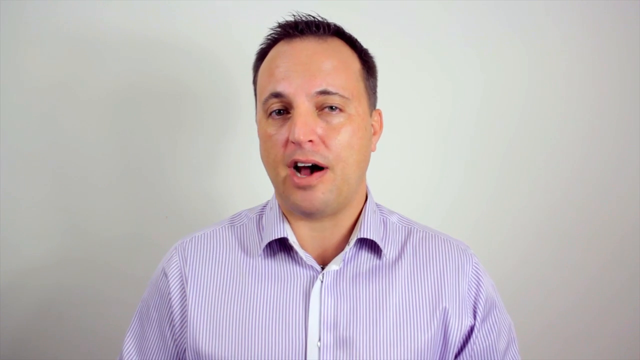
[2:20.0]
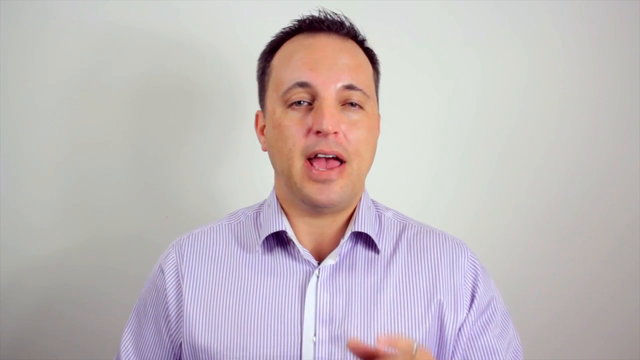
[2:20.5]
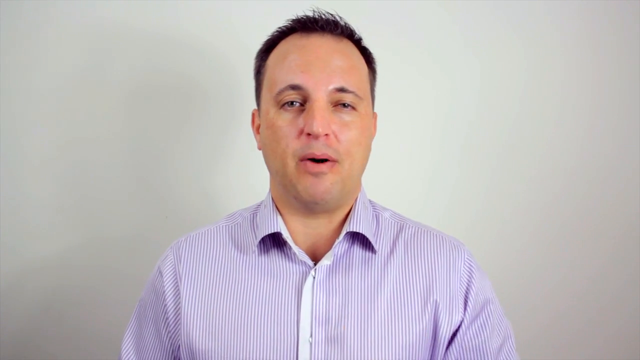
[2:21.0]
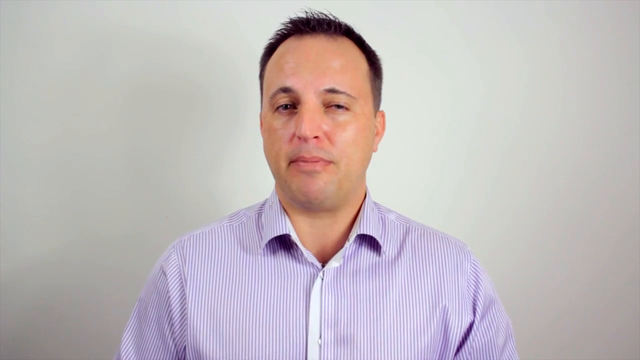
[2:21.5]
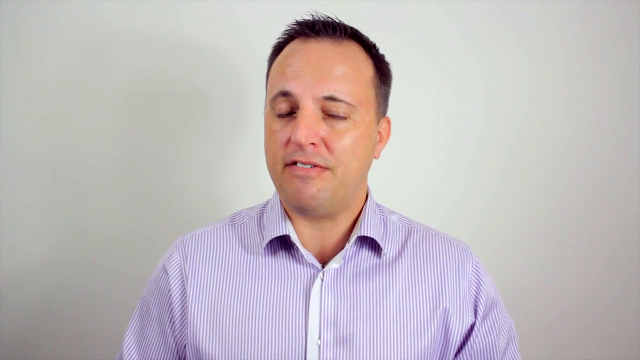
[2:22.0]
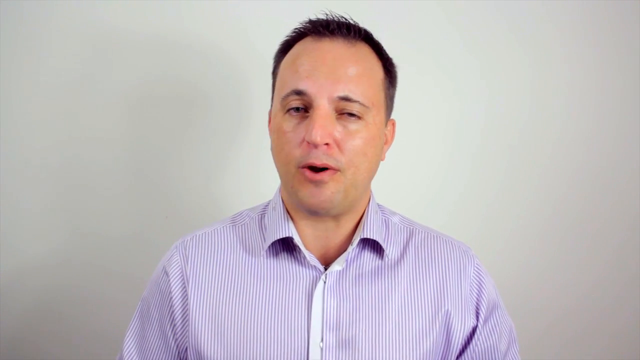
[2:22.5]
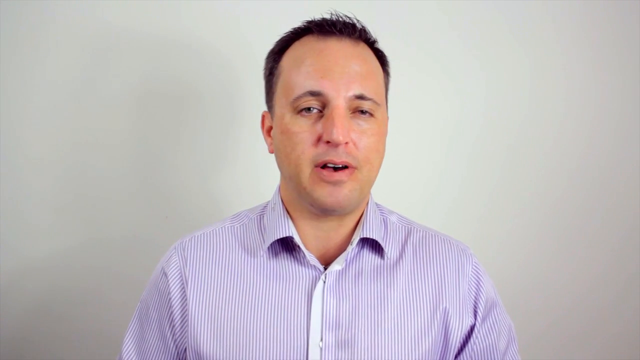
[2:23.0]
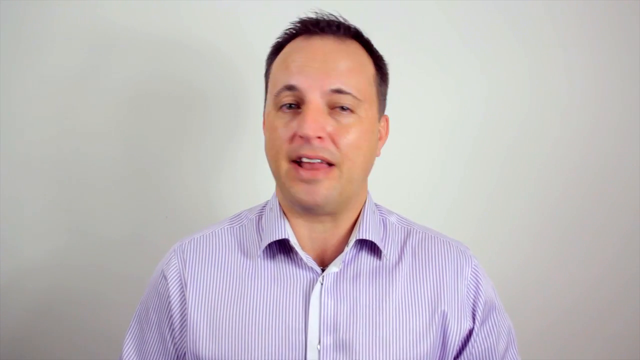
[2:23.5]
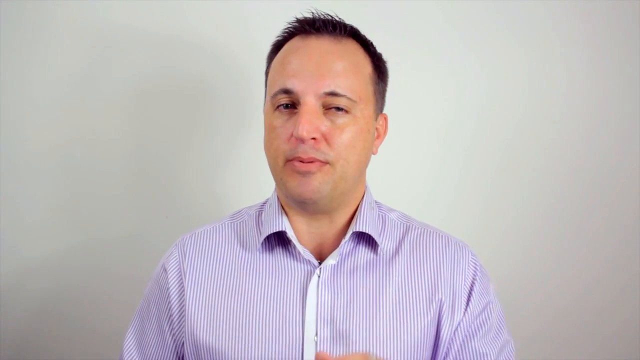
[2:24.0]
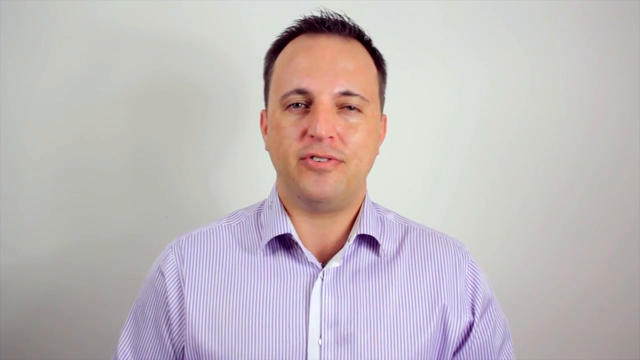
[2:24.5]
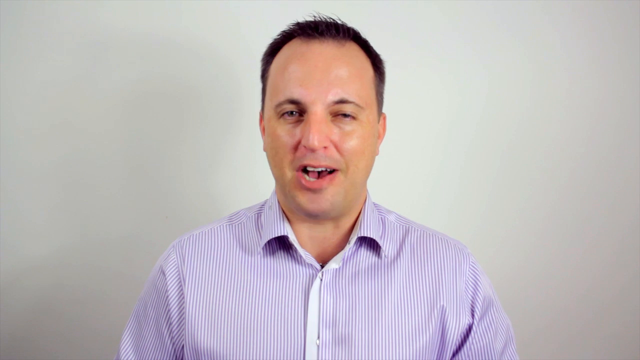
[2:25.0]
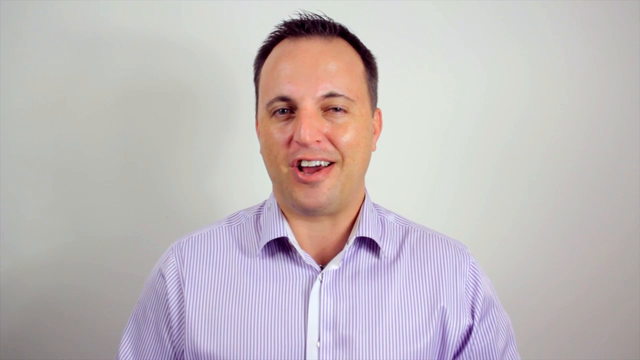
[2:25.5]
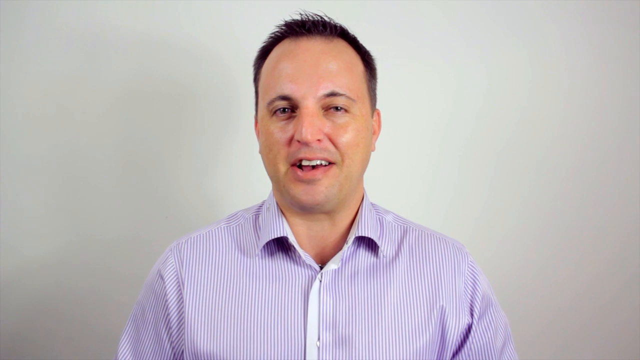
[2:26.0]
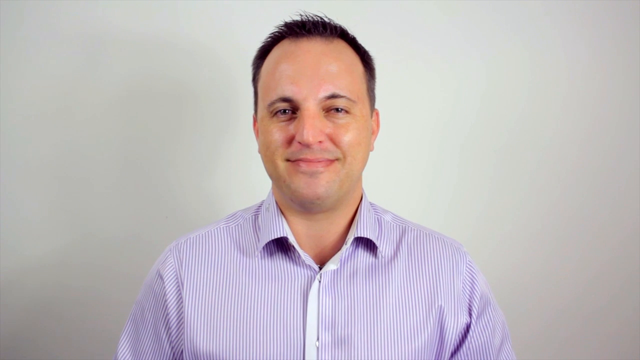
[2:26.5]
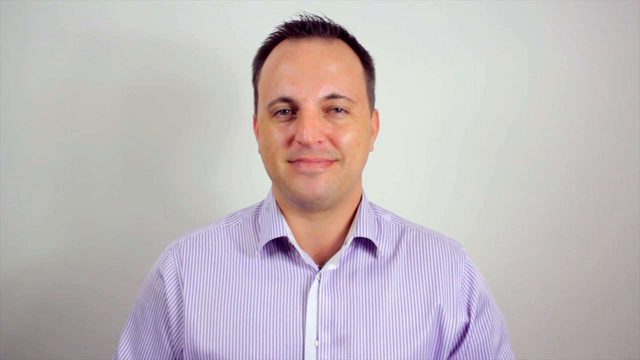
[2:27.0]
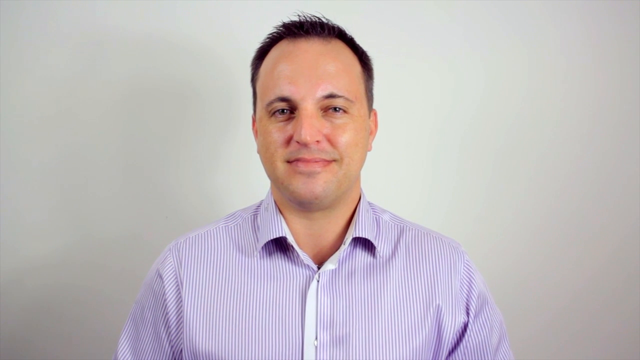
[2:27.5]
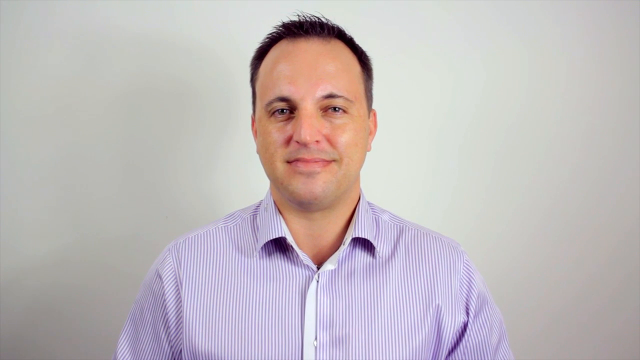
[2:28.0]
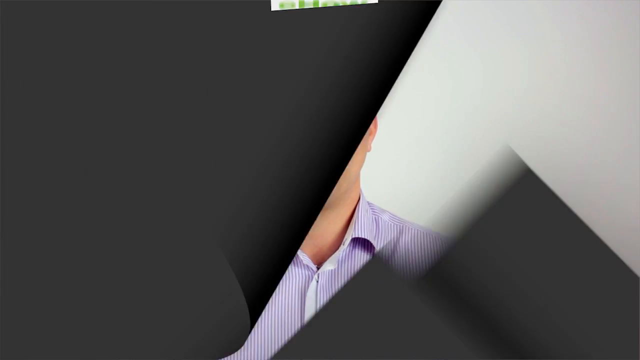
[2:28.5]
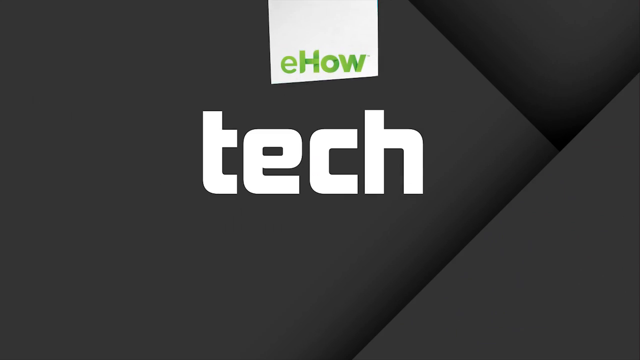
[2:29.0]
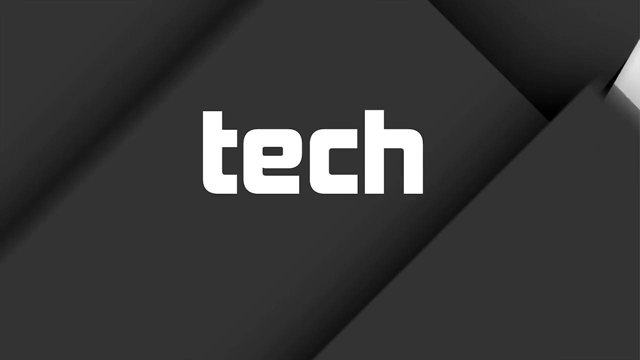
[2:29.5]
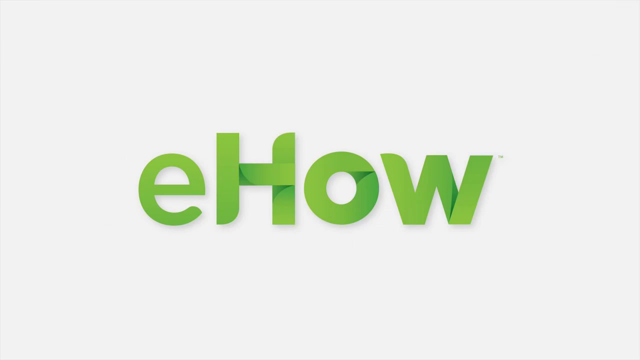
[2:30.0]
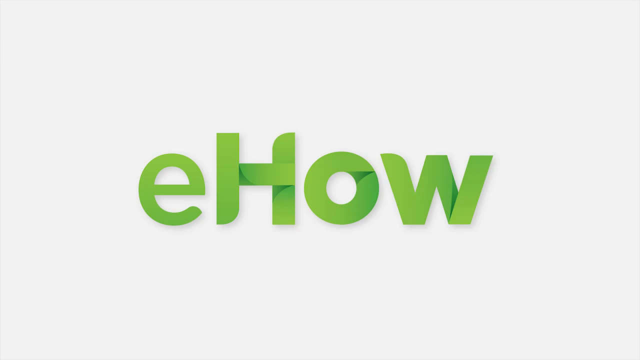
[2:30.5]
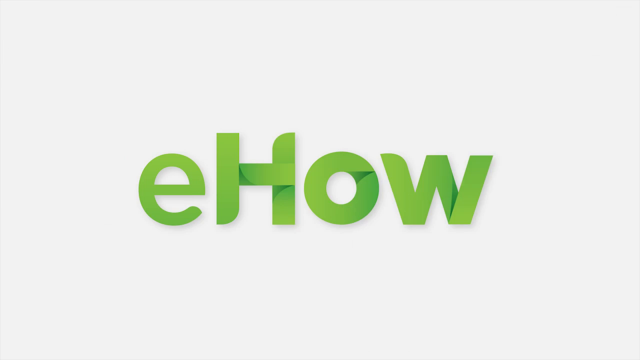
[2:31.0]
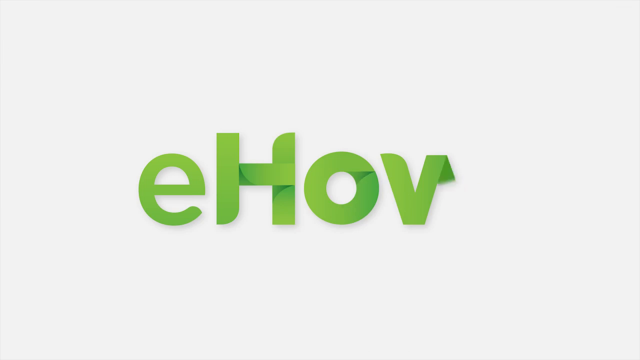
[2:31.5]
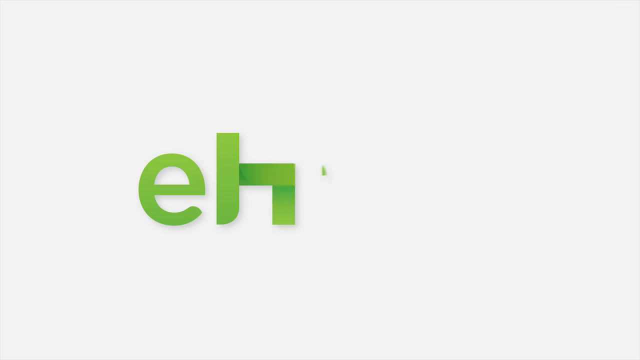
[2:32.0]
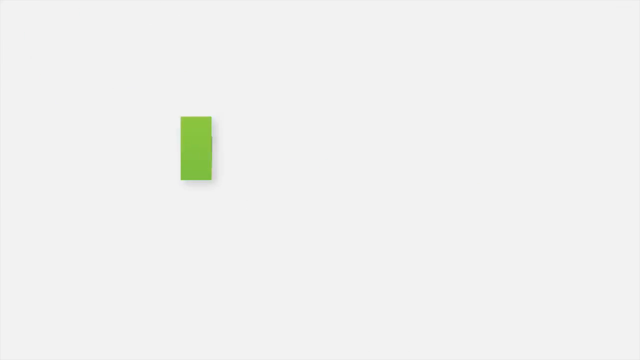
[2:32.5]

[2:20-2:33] The man is still talking, making small gestures with his left hand that moves in and out of view; he is smiling and looks happy. At the end of his shot he smiles and looks directly at the camera. A transition leads into the eHow tech logo, with "tech" in the center and eHow above it, followed by the eHow logo by itself in green. An animation fades the logo from right to left until it disappears, leaving a white background.